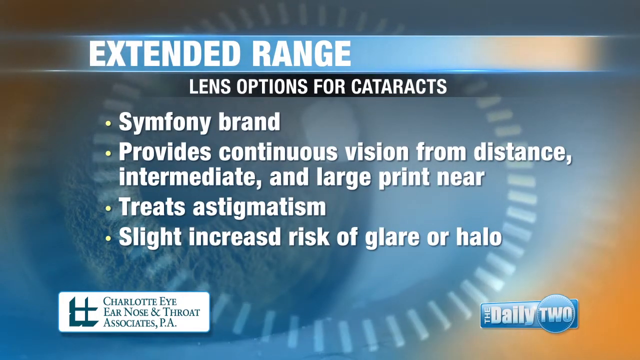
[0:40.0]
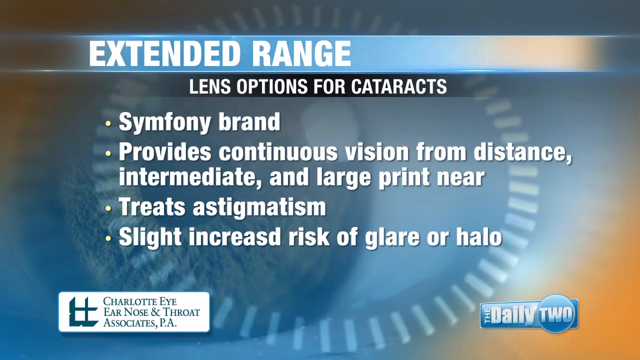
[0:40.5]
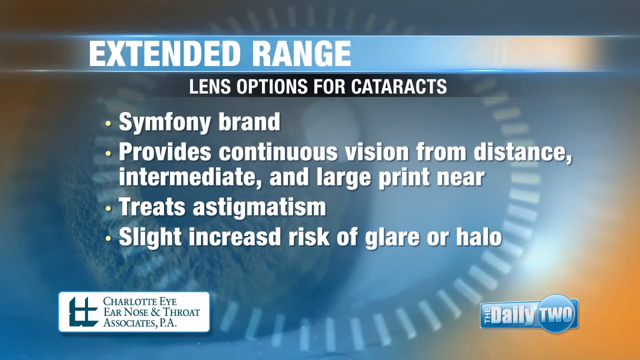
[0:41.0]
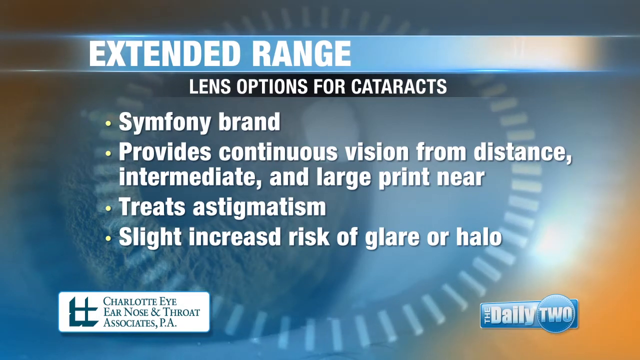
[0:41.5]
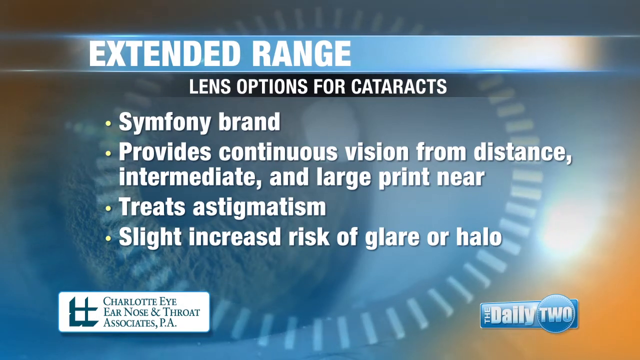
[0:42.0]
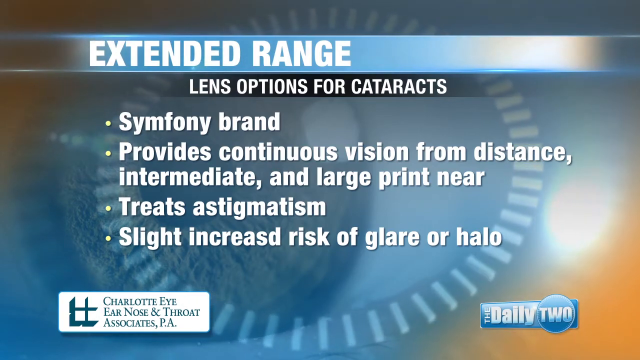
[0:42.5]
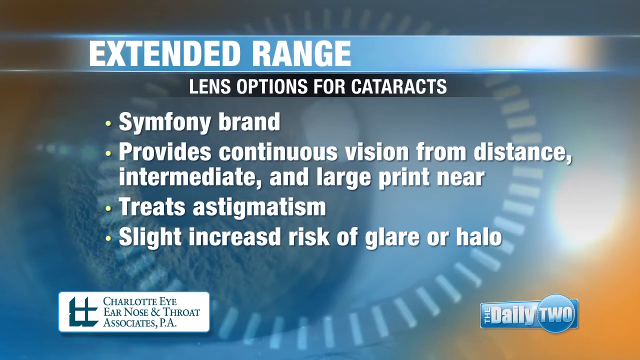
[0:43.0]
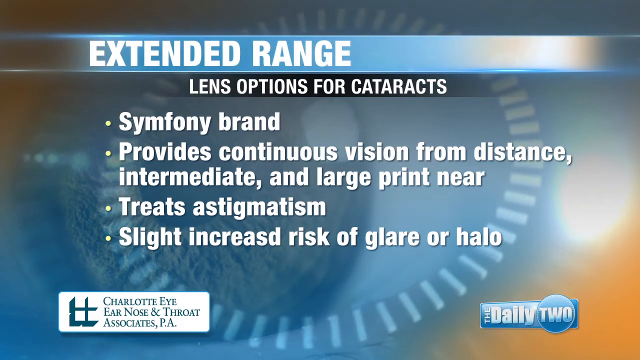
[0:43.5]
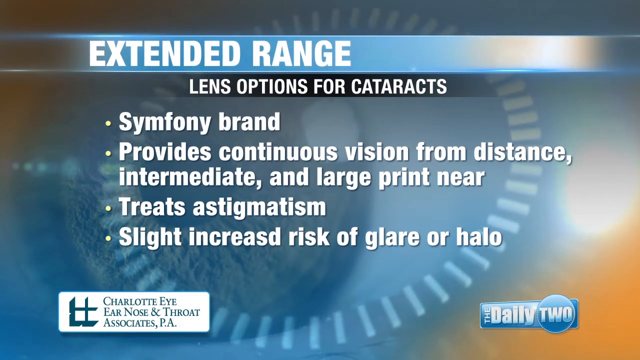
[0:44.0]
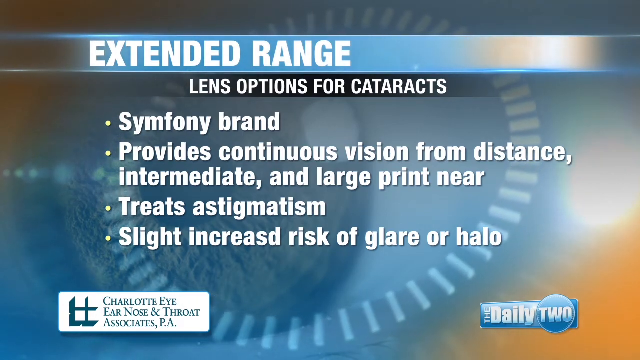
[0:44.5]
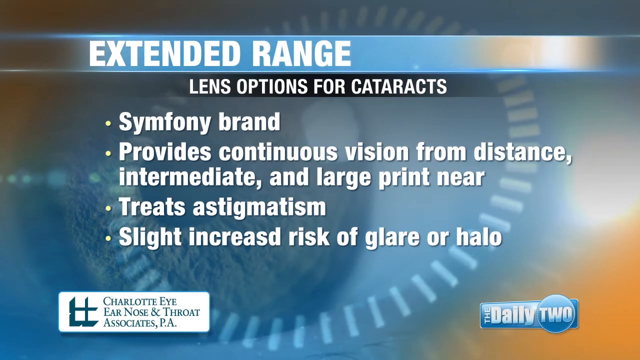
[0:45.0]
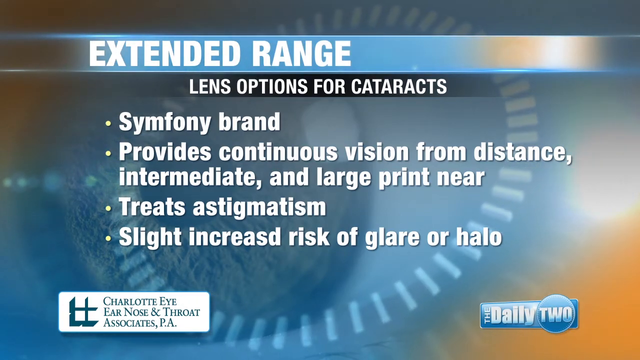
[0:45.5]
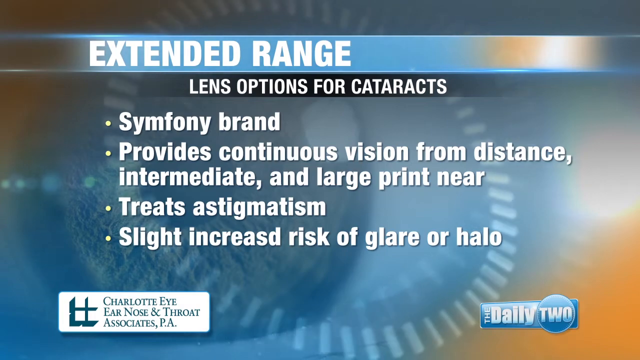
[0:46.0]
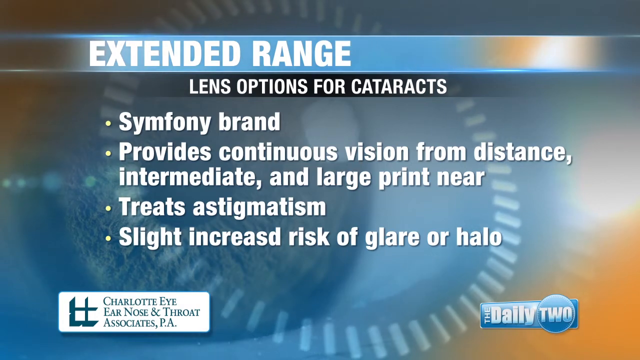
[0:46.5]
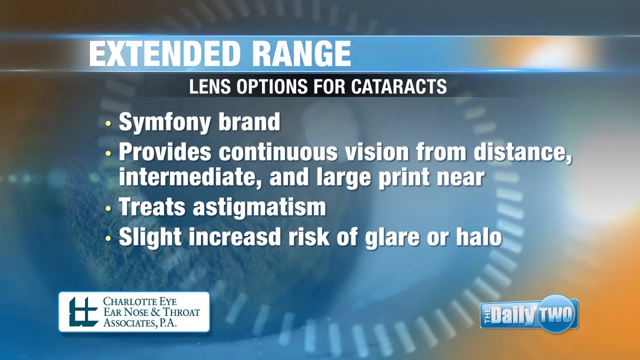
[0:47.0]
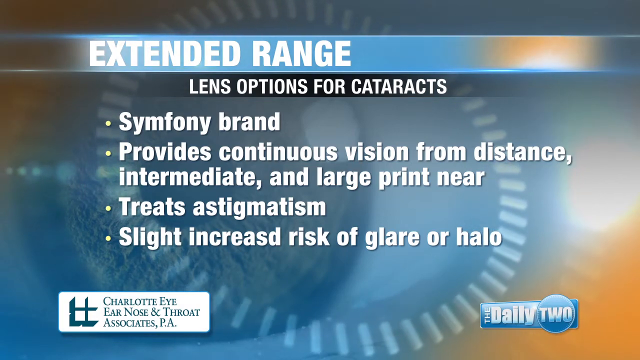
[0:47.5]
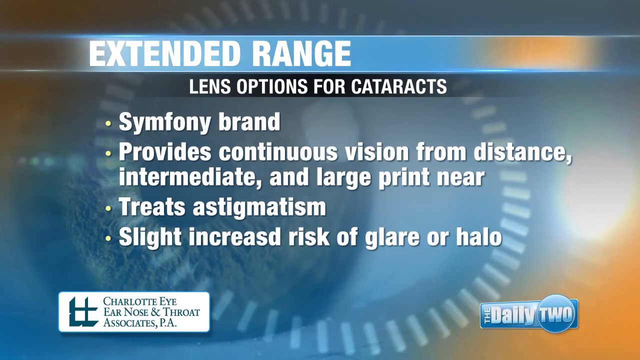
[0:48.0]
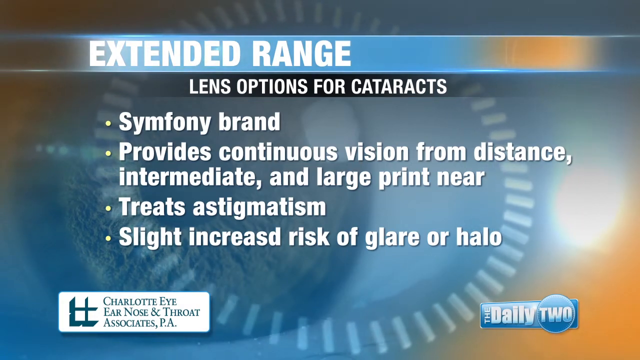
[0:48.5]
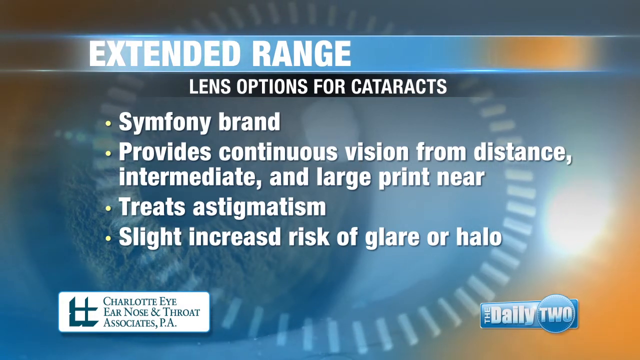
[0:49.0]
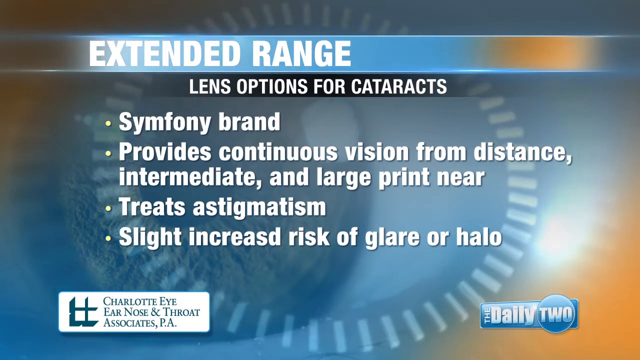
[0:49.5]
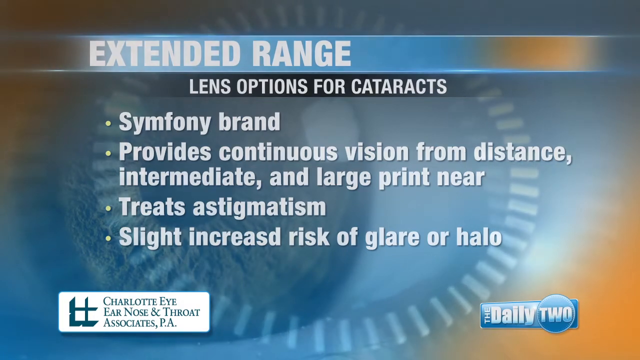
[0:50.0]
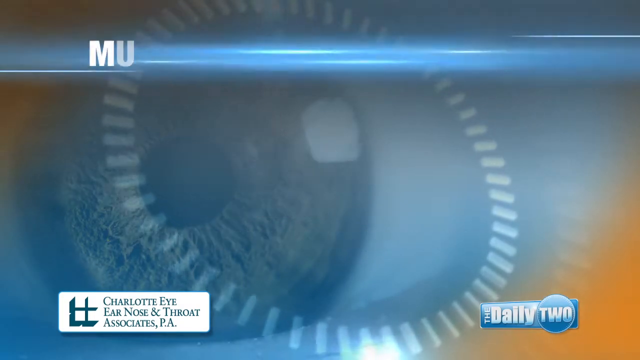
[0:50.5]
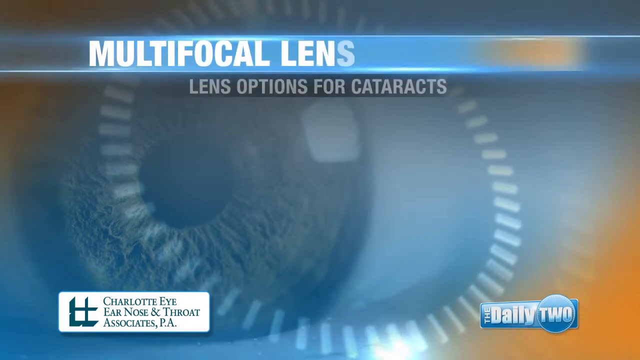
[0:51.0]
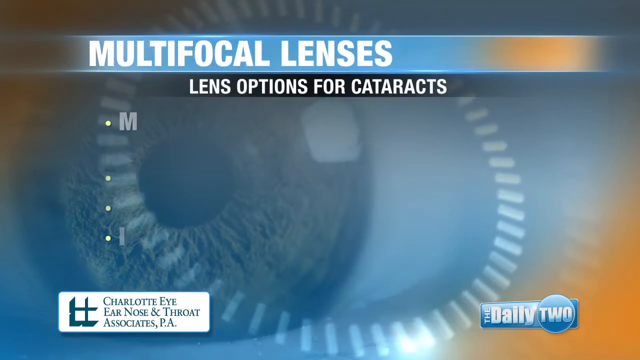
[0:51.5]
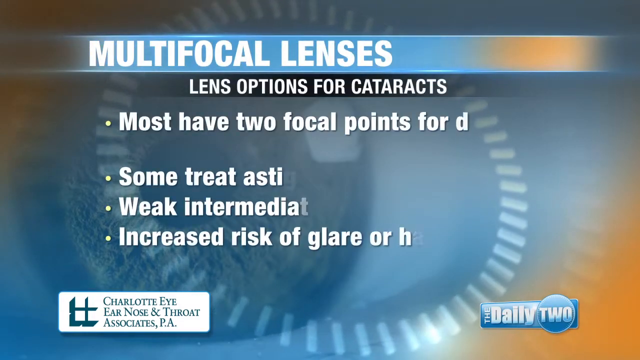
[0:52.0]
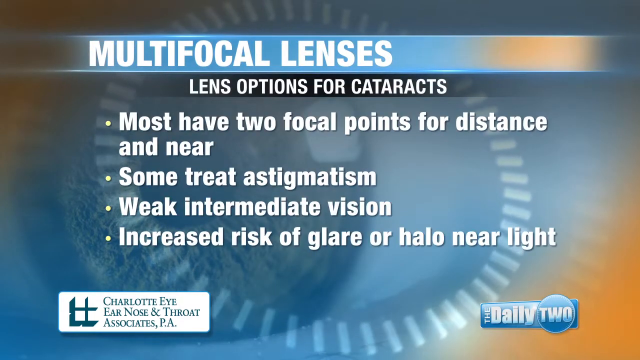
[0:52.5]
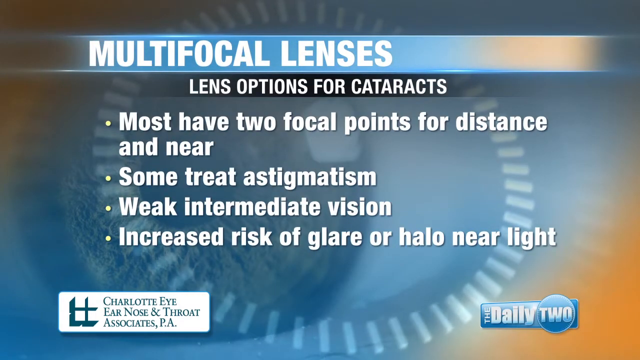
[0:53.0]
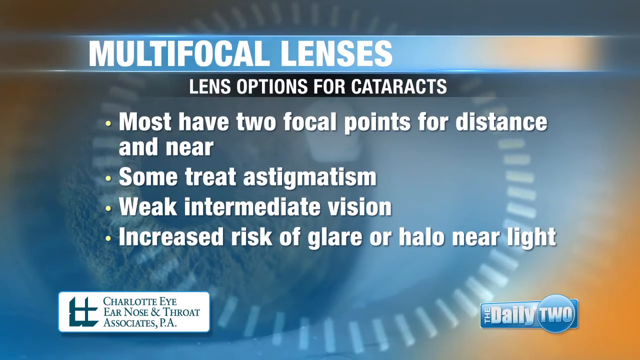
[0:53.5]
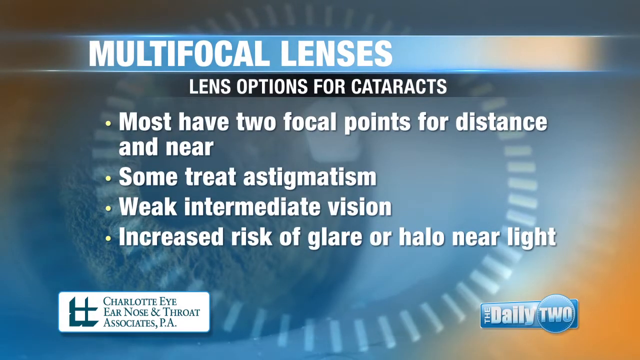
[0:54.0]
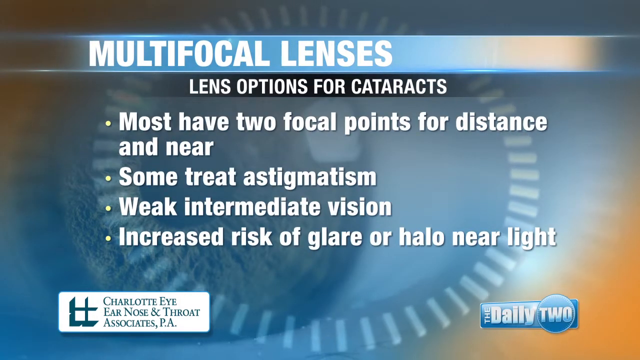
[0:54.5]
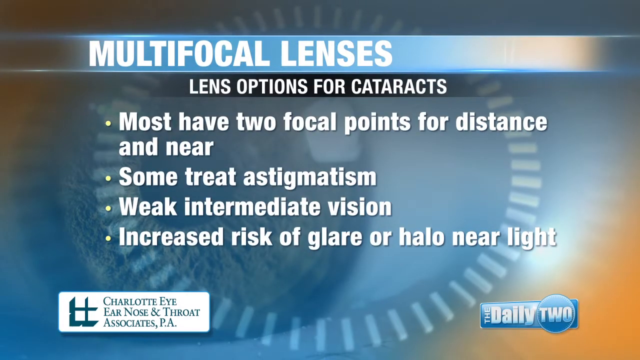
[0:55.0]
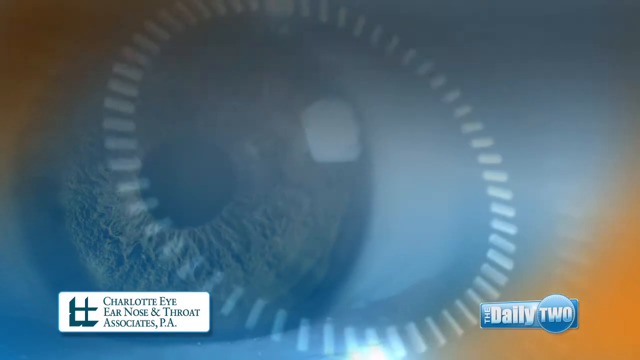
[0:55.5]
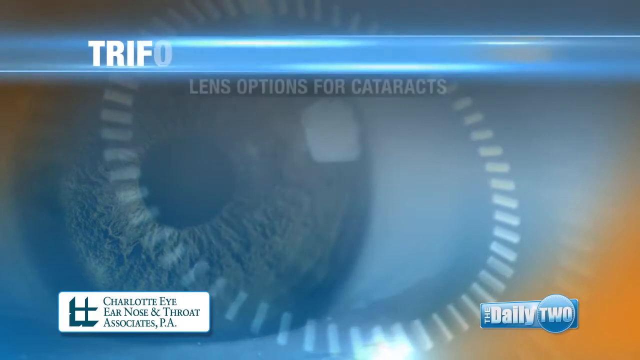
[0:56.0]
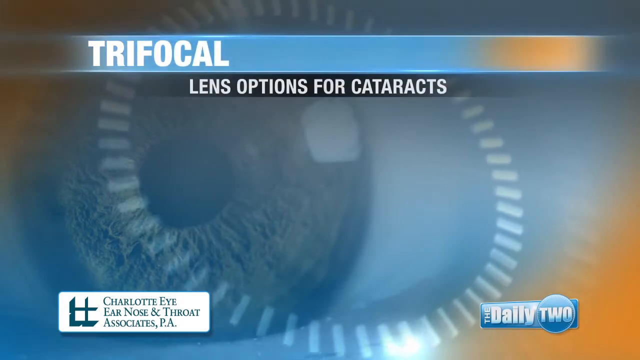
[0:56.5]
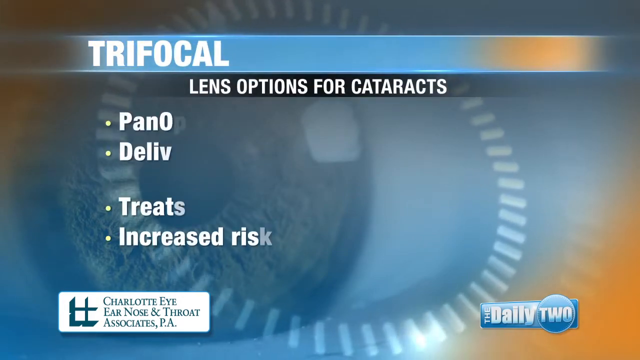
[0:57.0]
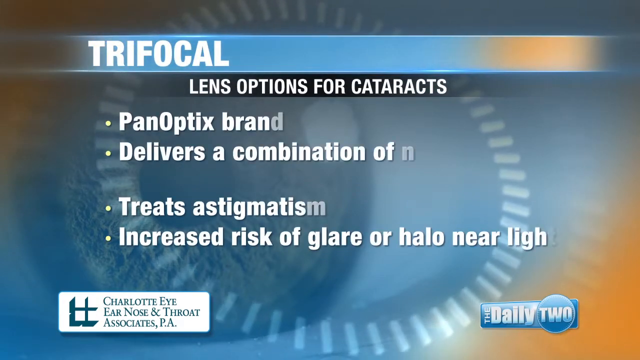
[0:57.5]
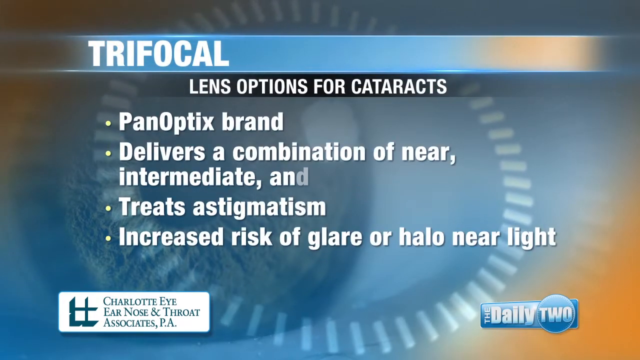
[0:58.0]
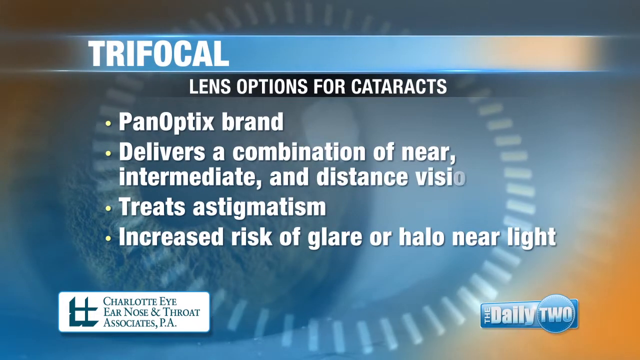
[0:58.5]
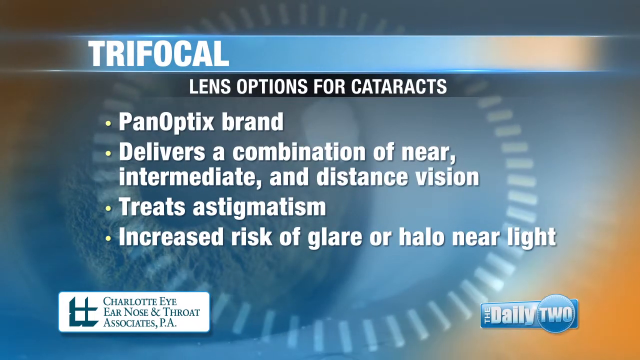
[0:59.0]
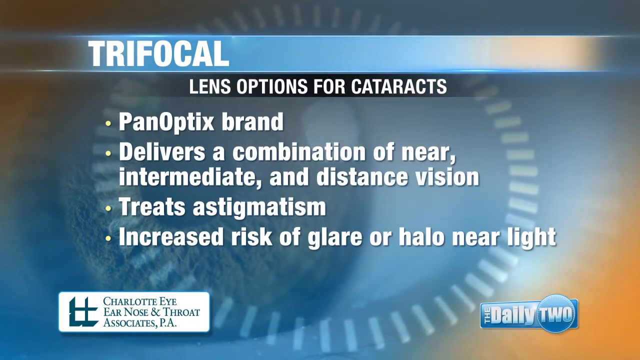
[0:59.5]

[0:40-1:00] A slide reads "extending range" with "lens for cataracts" beneath it, followed by bullet points: "Simfony brand", "provides continuous vision from distance, intermediate, and large print near", "treats astigmatism", and "slight increased risk of glare and halo". Next, a slide reads "multifocal lenses" and "lens options for cataracts", with points: "most have two focal points for distance and near", "some treat astigmatism", "weak intermediate vision", and "increased risk of glare and halo near light". Then a slide reads "trifocal lens options for cataracts", with points: "Panoptix brand delivers a combination of near, intermediate, and distant vision", "treats astigmatism", and "slight increase in risk of glare".